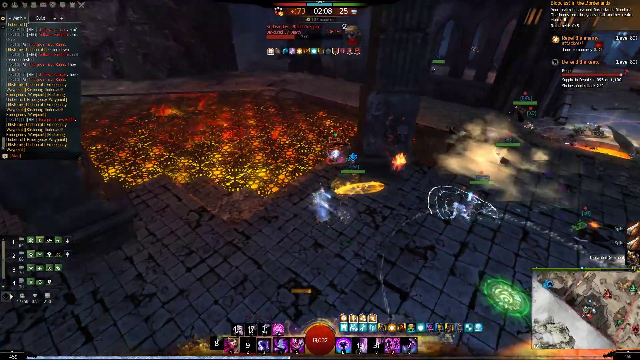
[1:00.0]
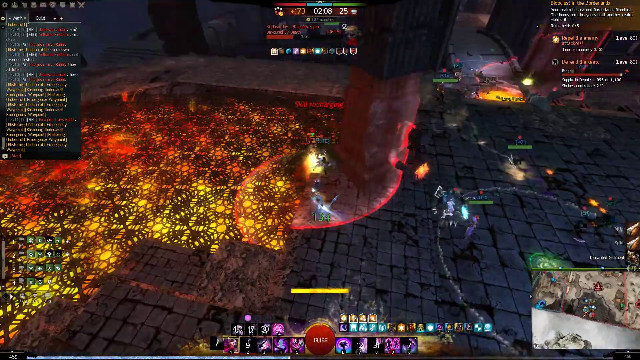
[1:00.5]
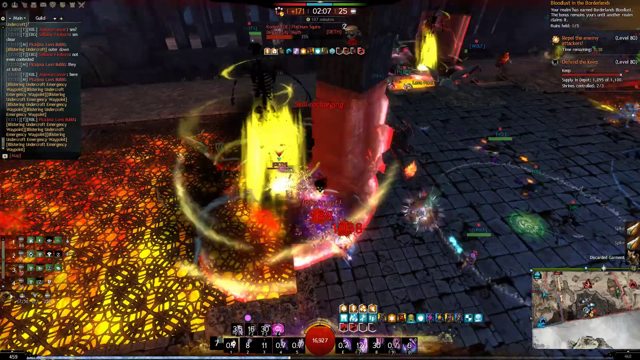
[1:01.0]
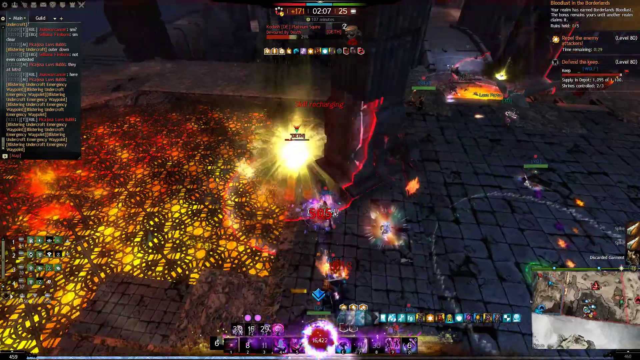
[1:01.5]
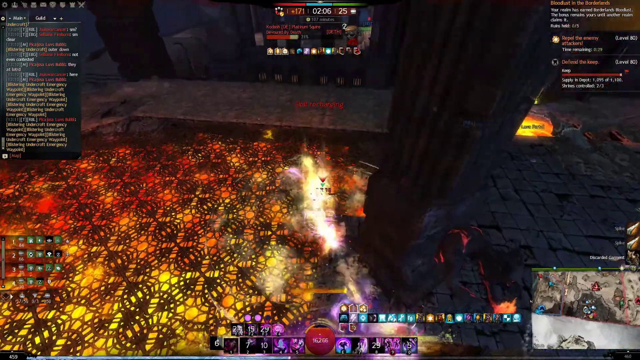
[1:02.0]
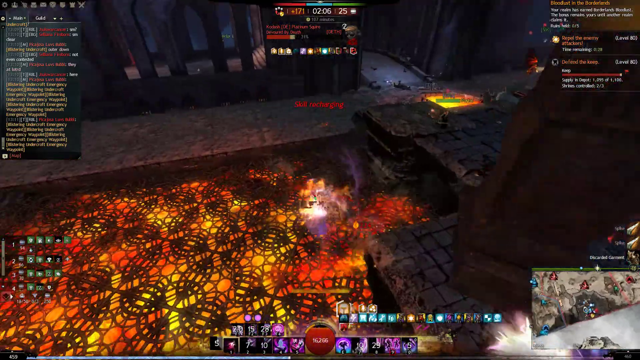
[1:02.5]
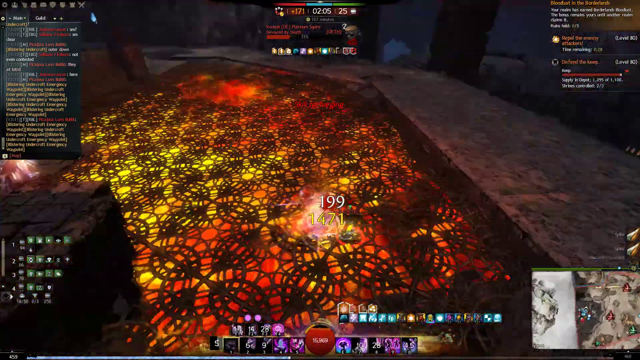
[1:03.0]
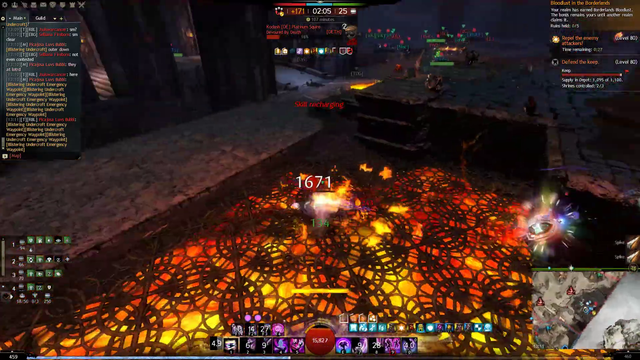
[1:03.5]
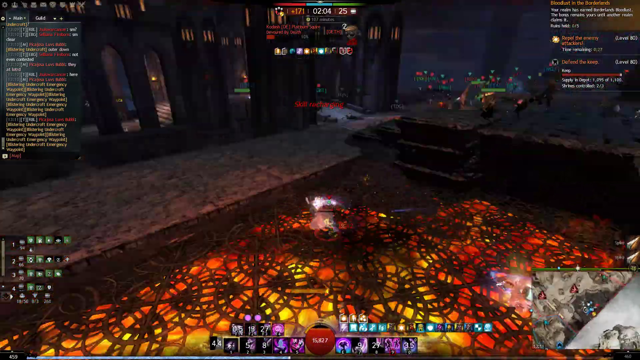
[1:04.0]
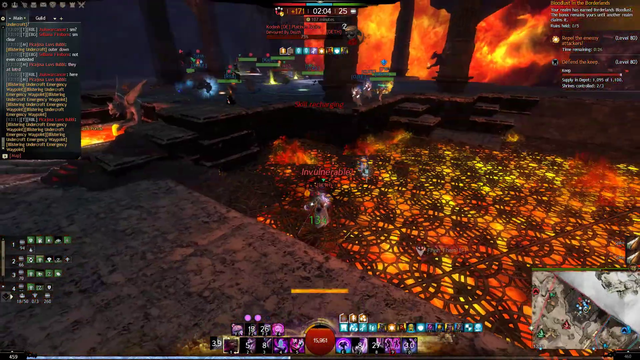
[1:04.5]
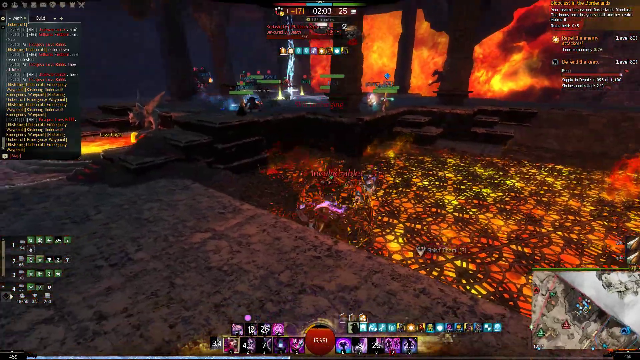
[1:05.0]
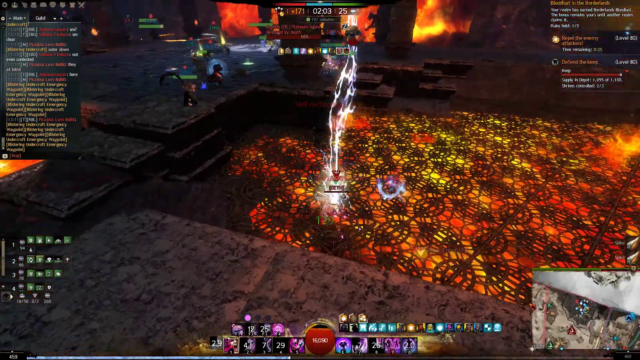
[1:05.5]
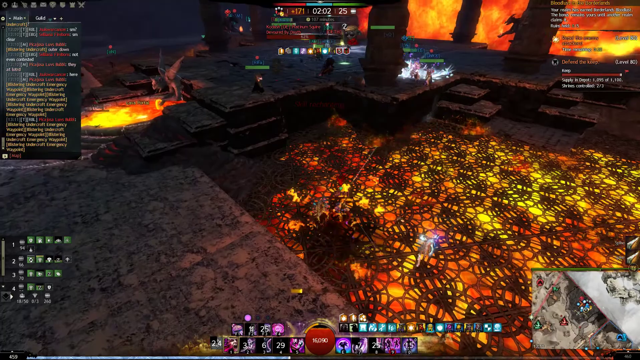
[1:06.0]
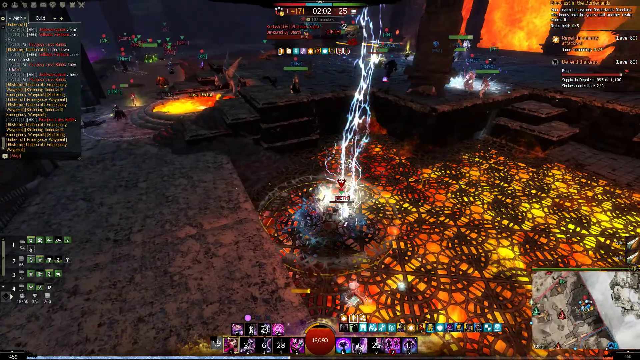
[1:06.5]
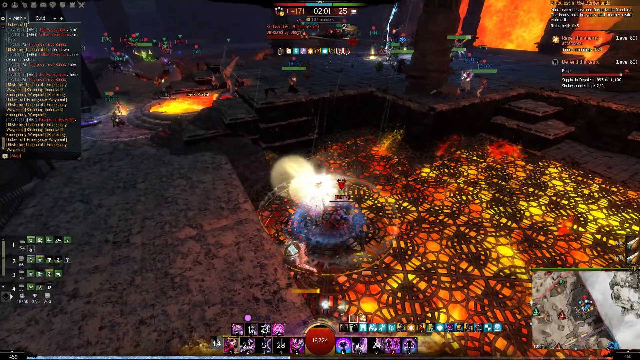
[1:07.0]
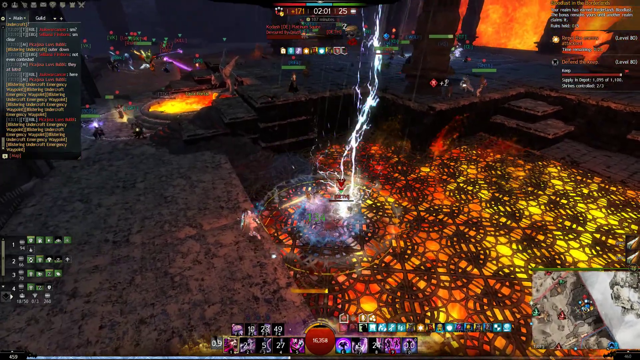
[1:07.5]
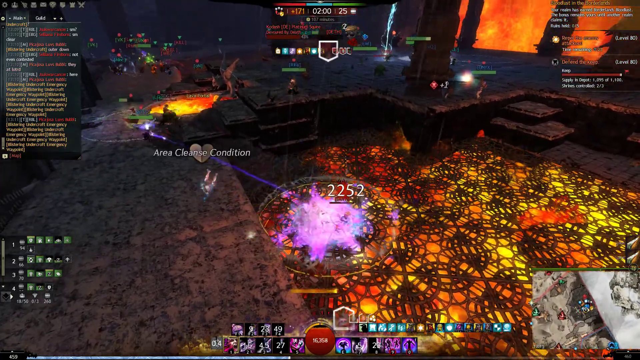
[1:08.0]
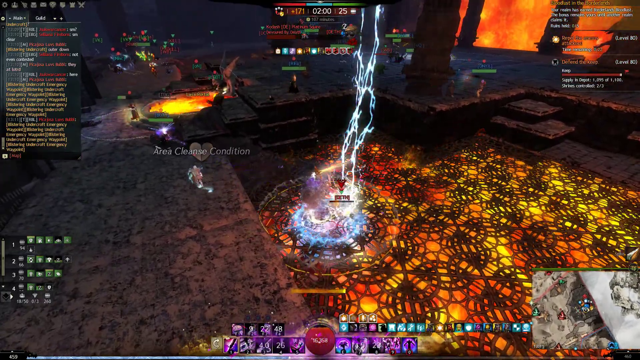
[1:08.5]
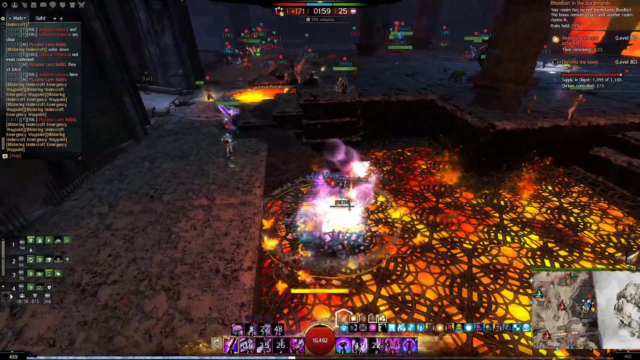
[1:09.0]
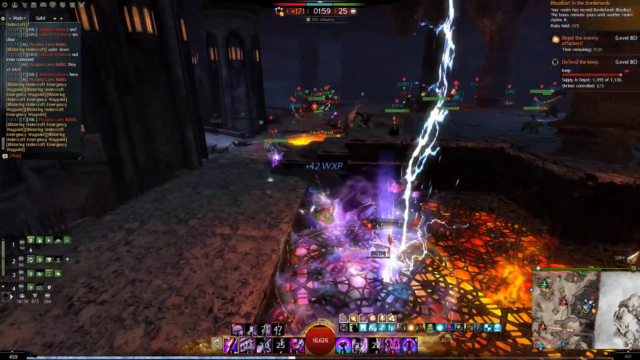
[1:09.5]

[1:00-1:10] Several characters are in the game at the same time, apparently a multiplayer game played online. The characters are in the middle of a dungeon area and seem to be running across opponents, but those opponents are not powerful enough to stop the group from advancing. A chat window in the upper left corner shows people chatting during the gameplay, probably the players on screen. A game map is in the lower right corner.